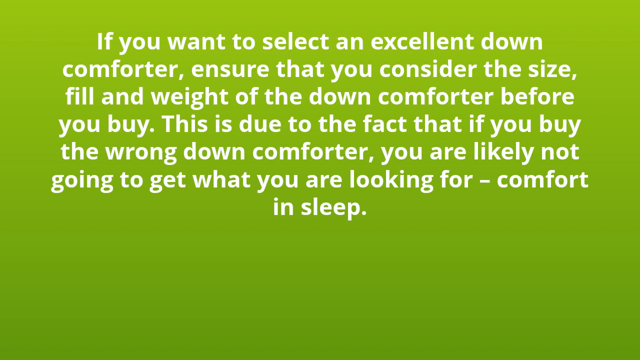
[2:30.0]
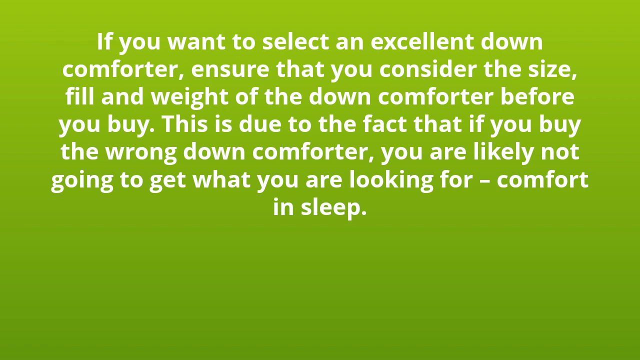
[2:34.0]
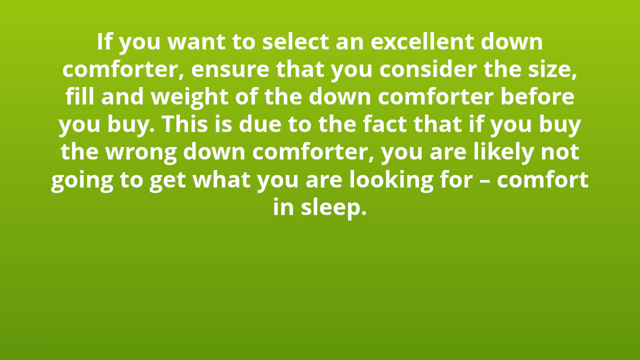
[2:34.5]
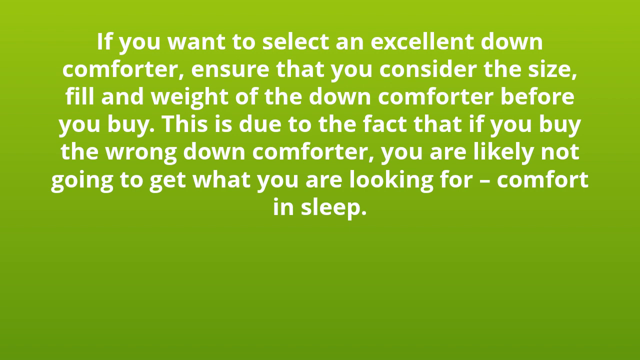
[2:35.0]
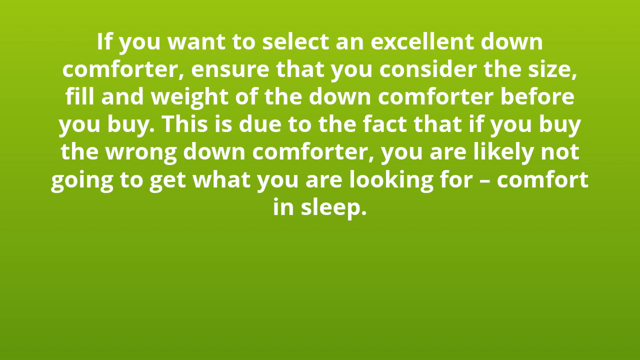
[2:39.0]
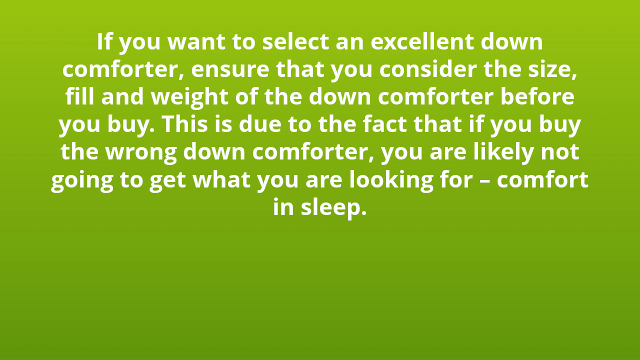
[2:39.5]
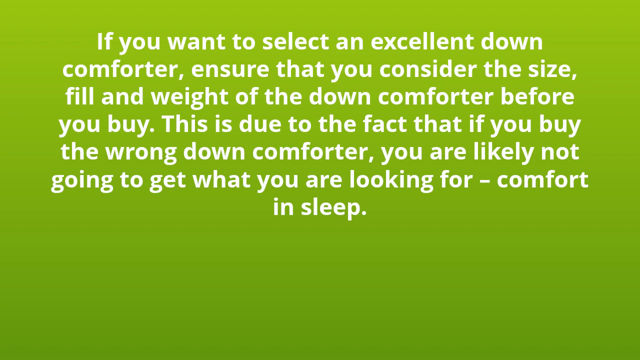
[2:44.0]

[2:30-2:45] The final slide of the down comforter ad is green with white writing centered in the middle: "If you want to select an excellent down comforter, ensure that you consider the size, fill, and weight of the down comforter before you buy. This is due to the fact that if you buy the wrong down comforter, you are likely not going to get what you are looking for. Comfort in sleep." No other slide follows. There are no pictures at all, only a green slide with white letters centered in the middle.